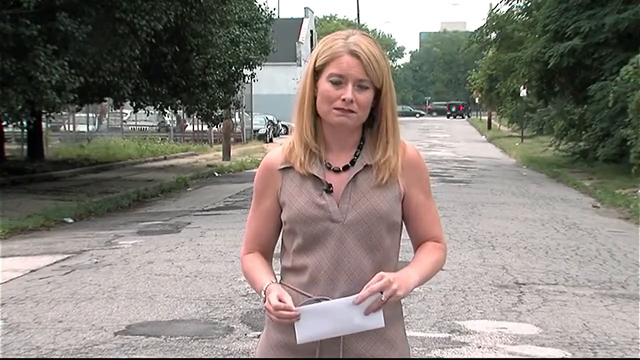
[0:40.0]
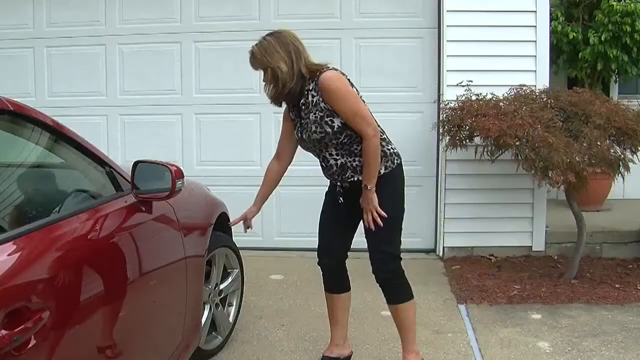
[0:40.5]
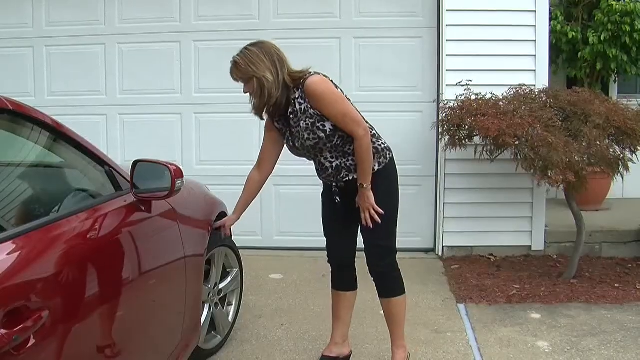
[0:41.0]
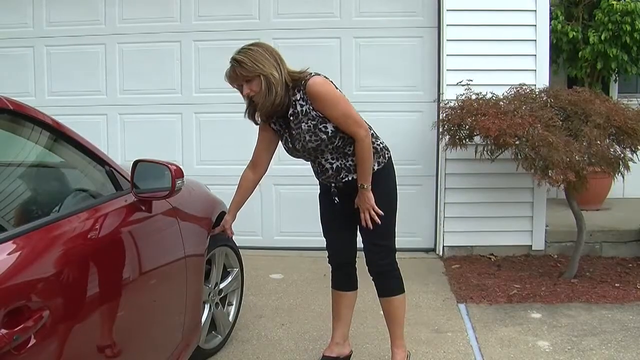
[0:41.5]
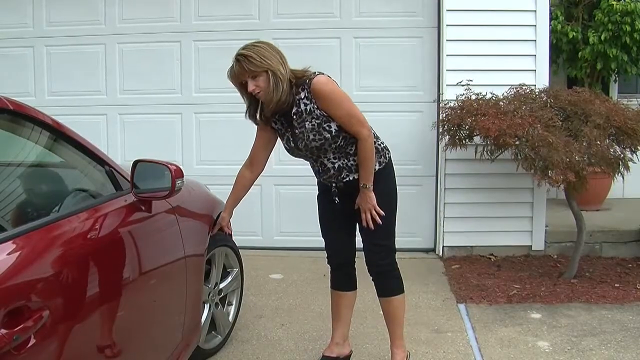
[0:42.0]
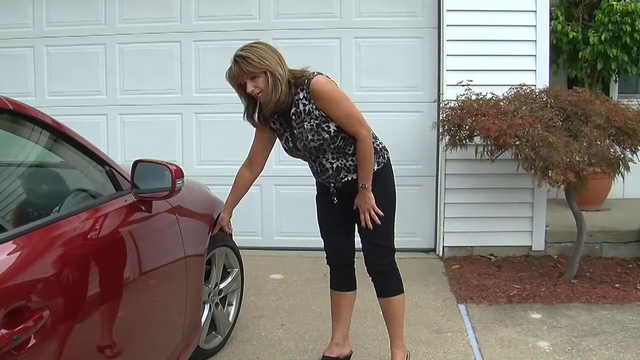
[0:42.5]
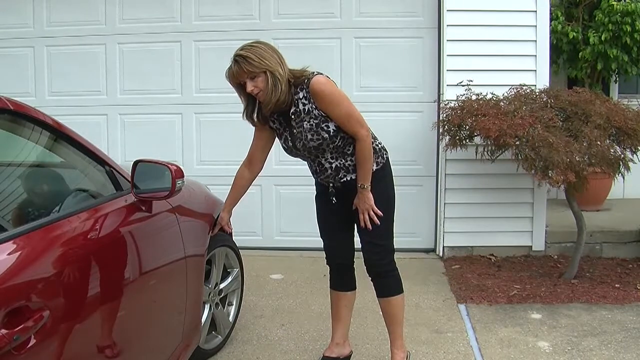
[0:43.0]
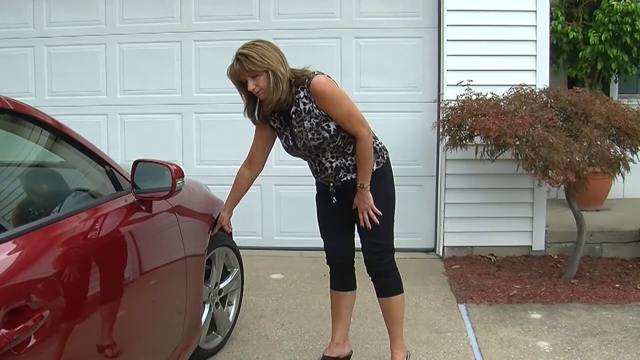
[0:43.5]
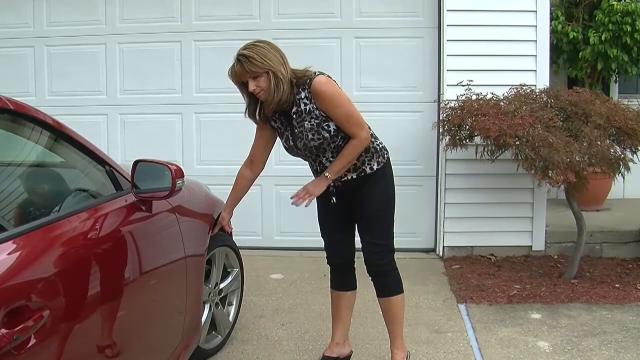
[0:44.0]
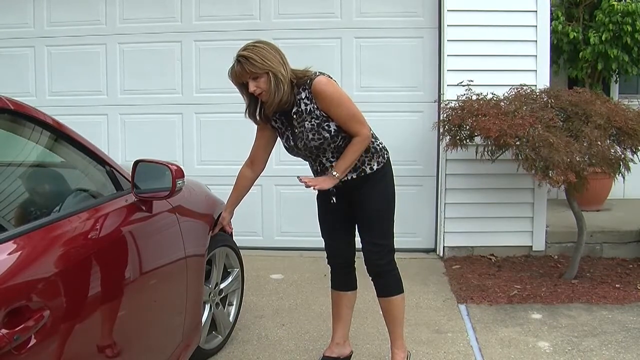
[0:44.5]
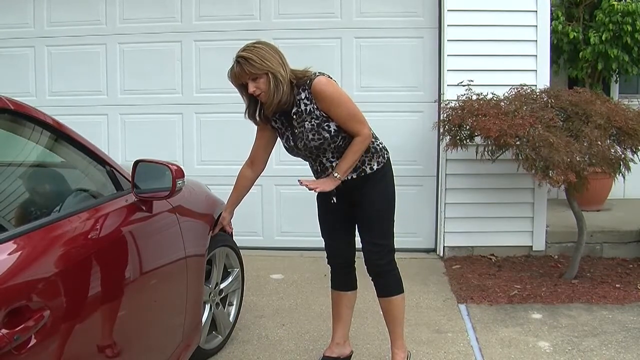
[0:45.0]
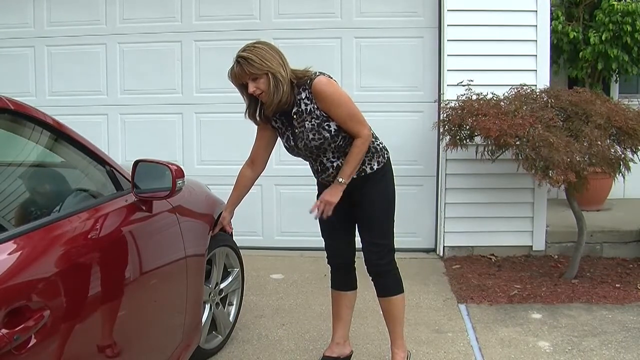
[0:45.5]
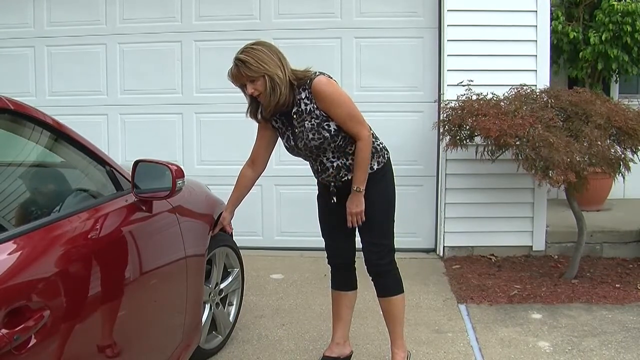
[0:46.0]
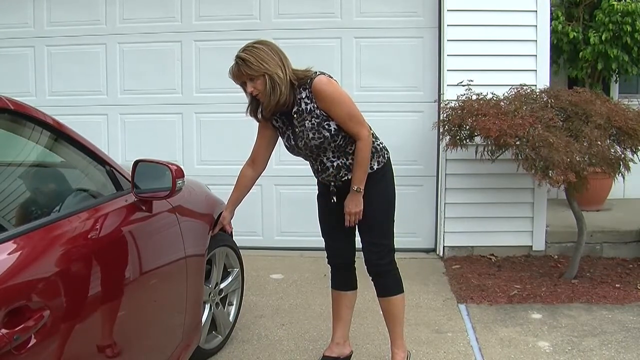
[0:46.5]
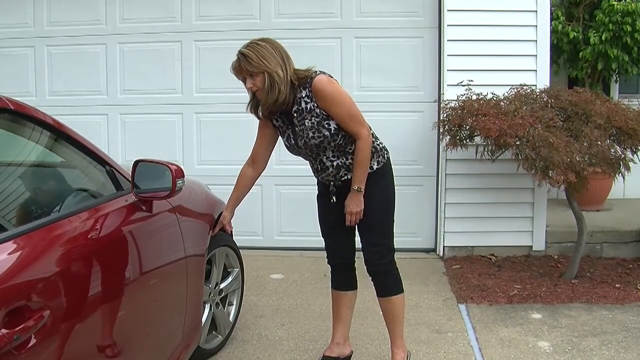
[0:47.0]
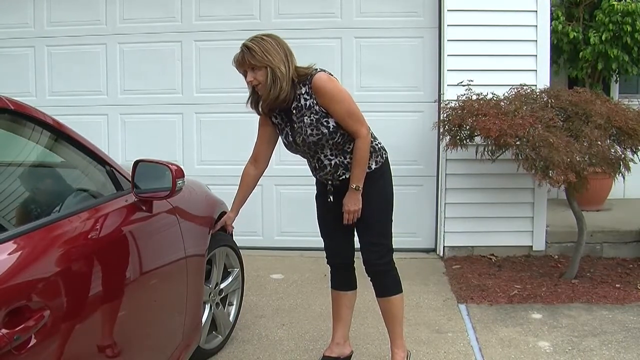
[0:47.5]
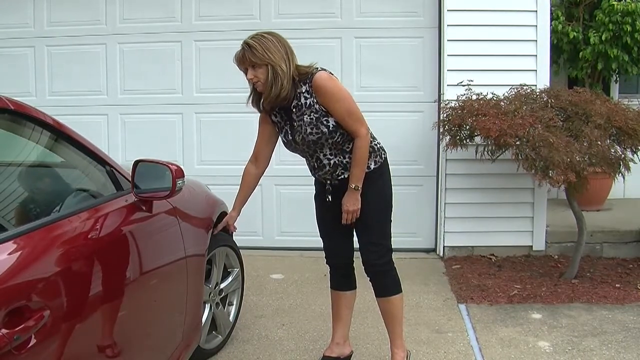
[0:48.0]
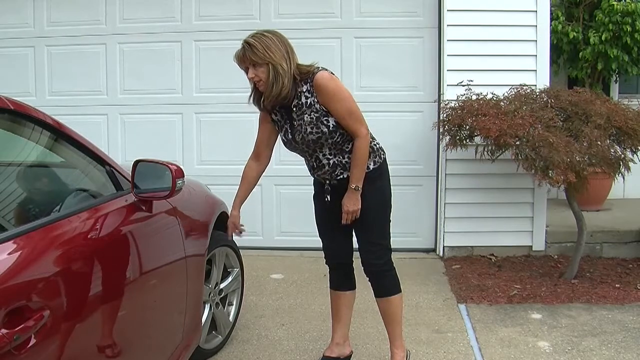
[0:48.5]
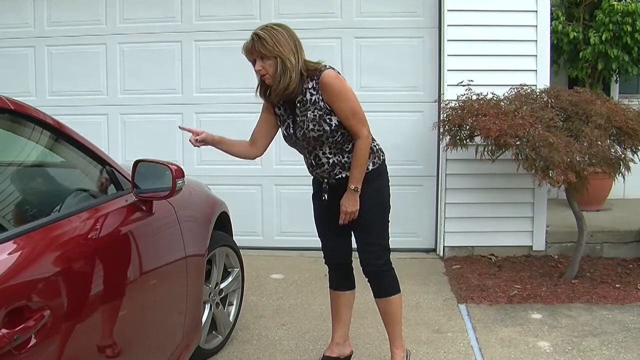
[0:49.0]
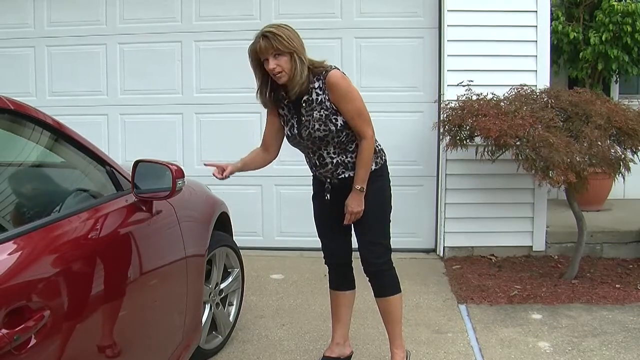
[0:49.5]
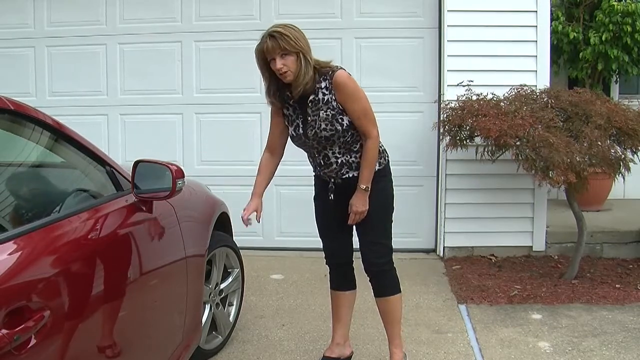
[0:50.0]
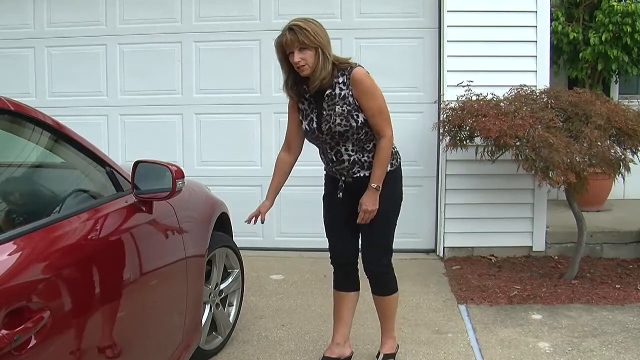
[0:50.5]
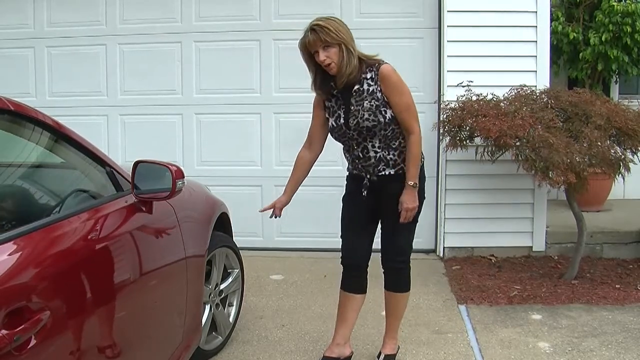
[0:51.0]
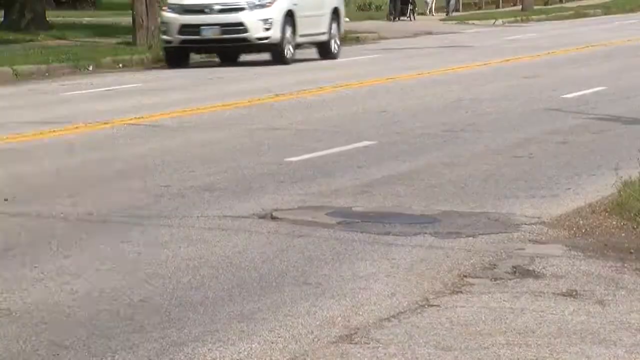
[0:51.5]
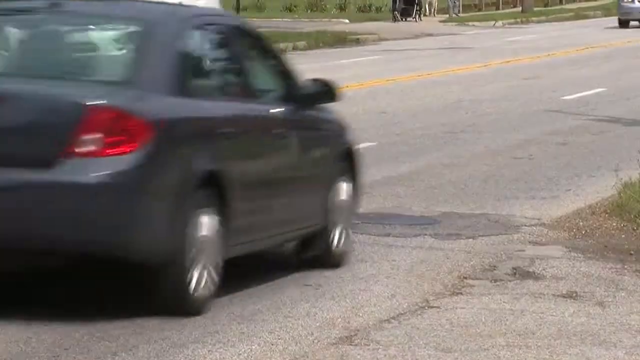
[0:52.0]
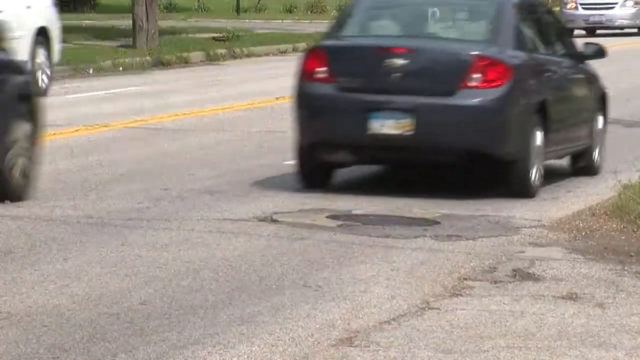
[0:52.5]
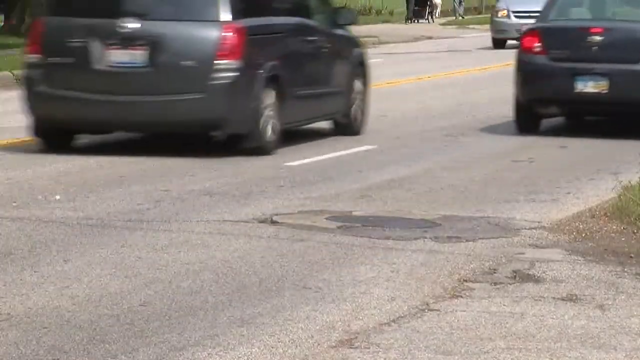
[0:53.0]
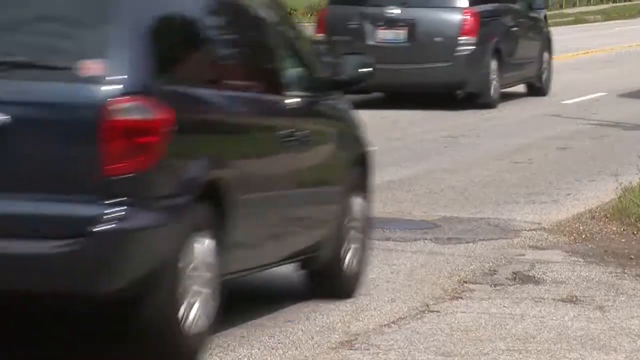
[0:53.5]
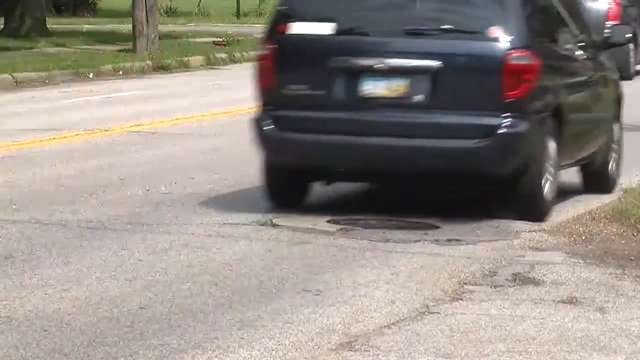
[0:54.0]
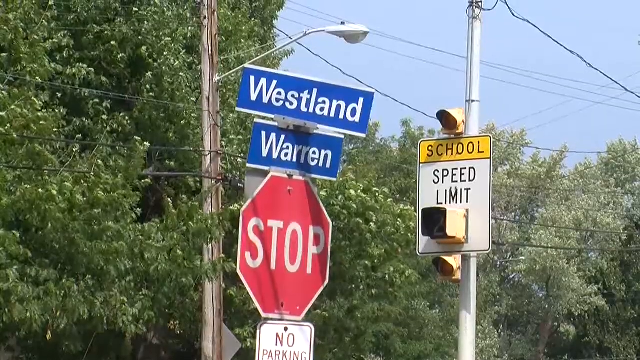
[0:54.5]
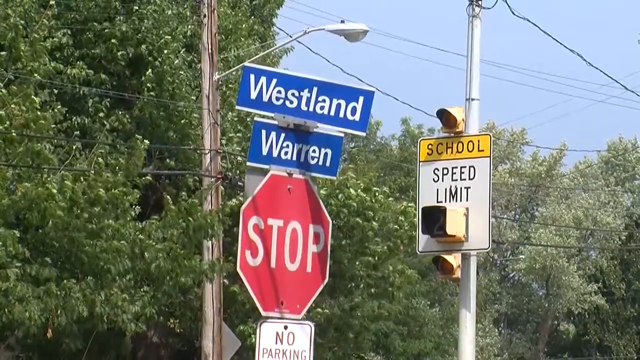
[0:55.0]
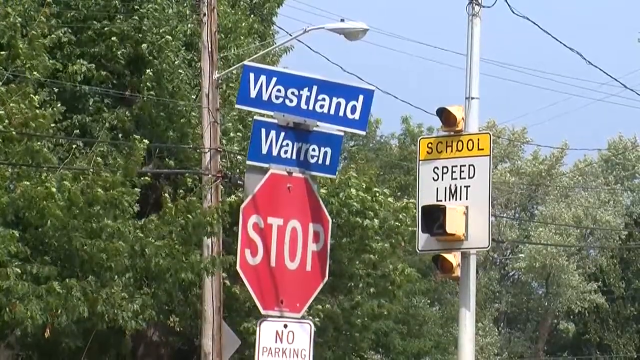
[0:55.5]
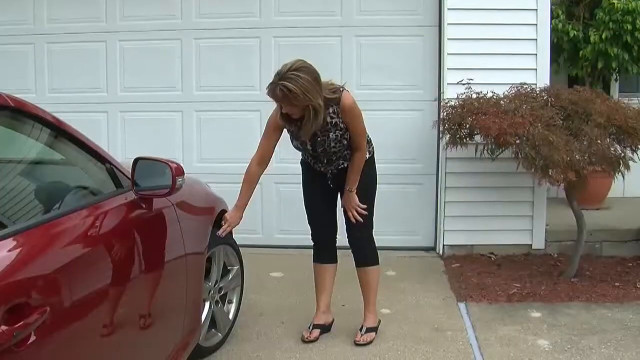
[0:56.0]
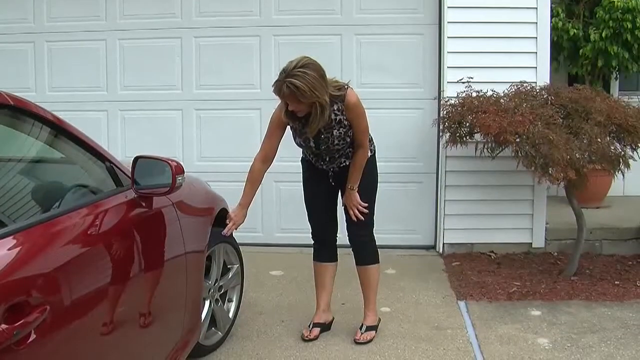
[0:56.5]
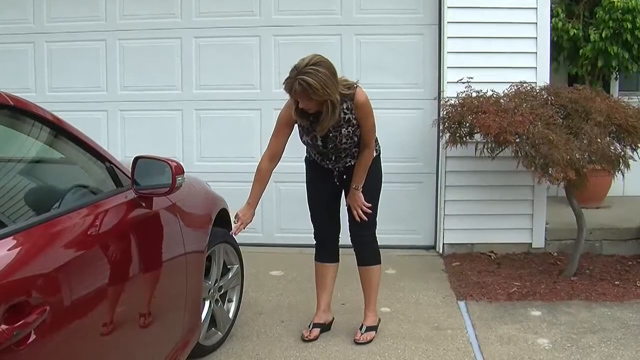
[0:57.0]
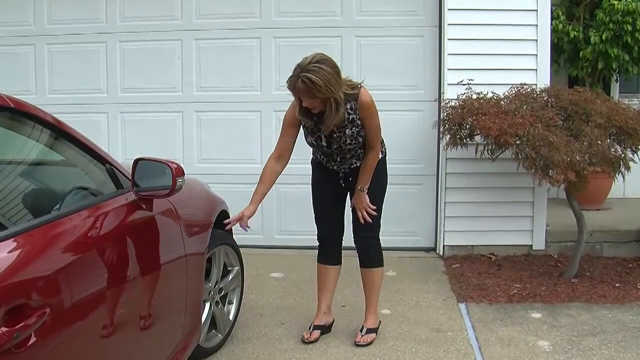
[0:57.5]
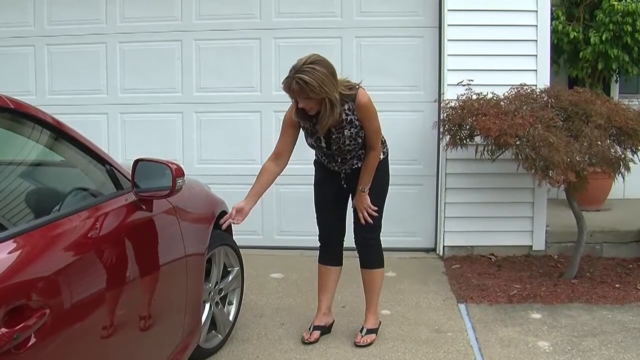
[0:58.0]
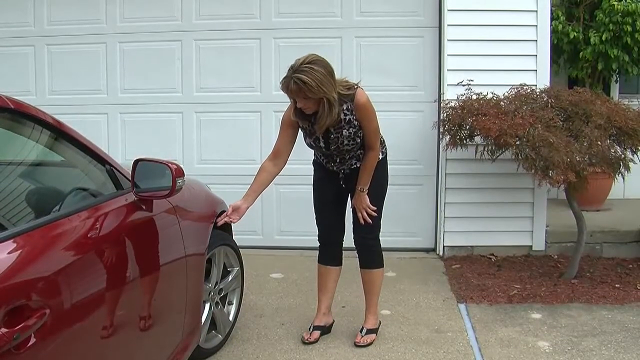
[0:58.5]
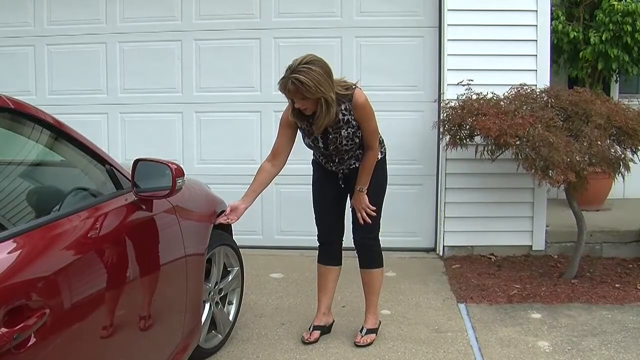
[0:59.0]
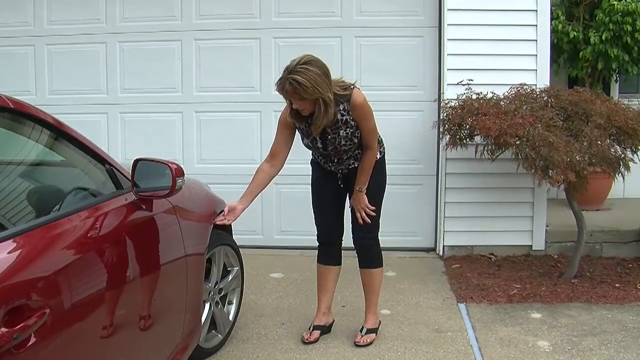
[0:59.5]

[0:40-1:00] The lady continues reporting while holding the paper, still in the same attire, on a rough road with potholes. In the background, some vehicles are parked, some are moving, and some have stopped for others to pass. The scene shifts to the parking area of a house, where a woman stands next to a red or maroon car, touching its tyre and seemingly showing that the tyre has deflated or that something has happened to it due to the road condition. A tarmac road appears with its holes kind of fixed. Another scene shows road signs, including a stop sign and a speed limit sign, along with cameras, Westland Warren, and a lamp. The video returns to the woman standing next to the maroon car, touching its tyre, with a garage door behind her. She is in front of a house, apparently her own, and her reflection is visible on the maroon car.